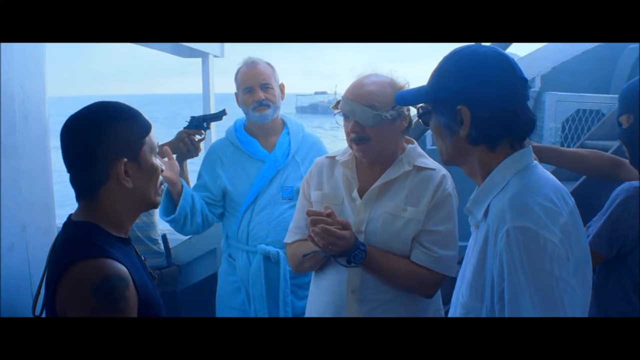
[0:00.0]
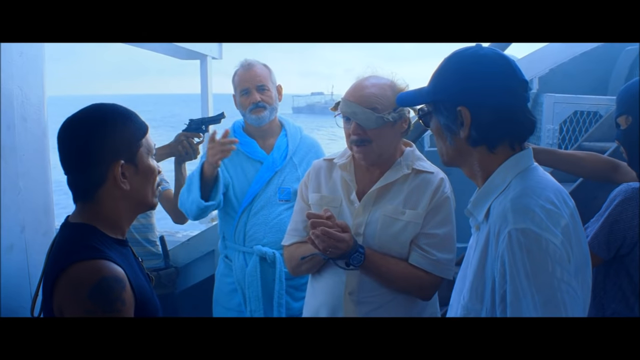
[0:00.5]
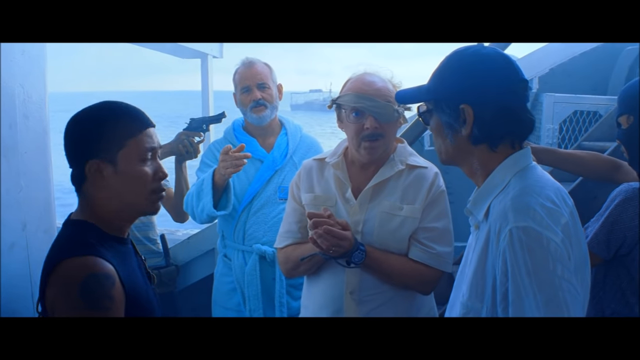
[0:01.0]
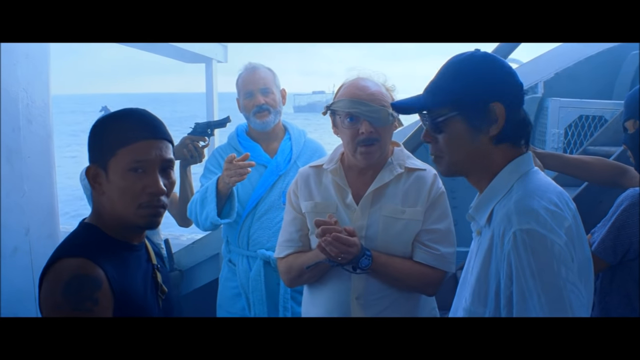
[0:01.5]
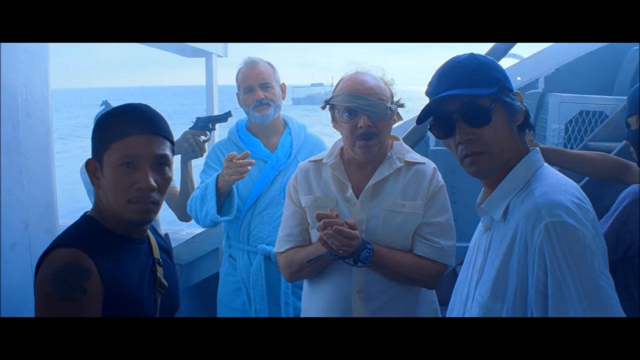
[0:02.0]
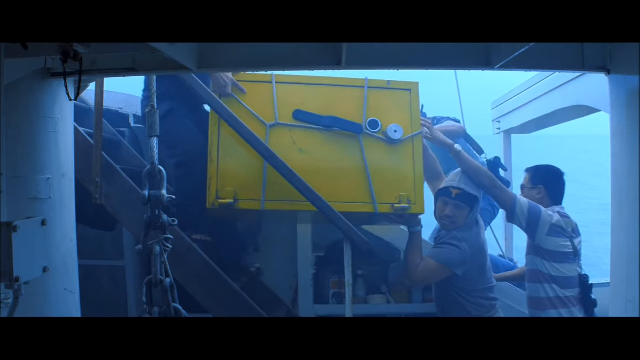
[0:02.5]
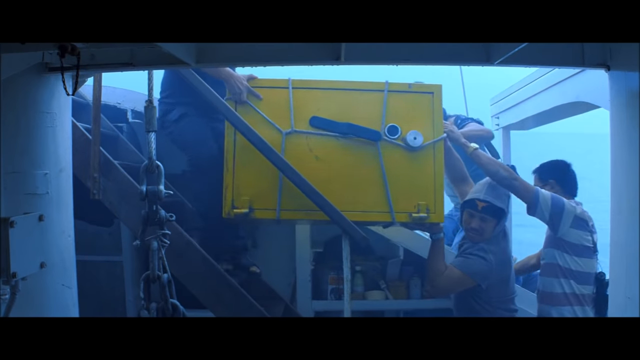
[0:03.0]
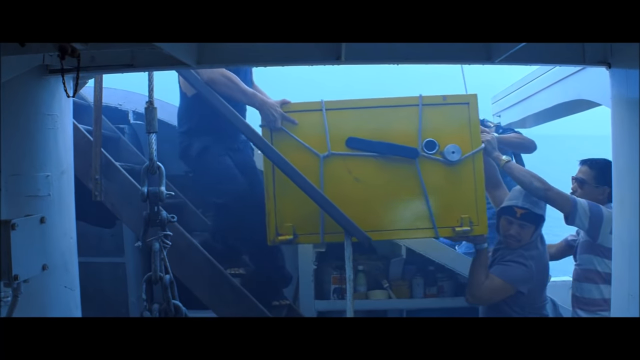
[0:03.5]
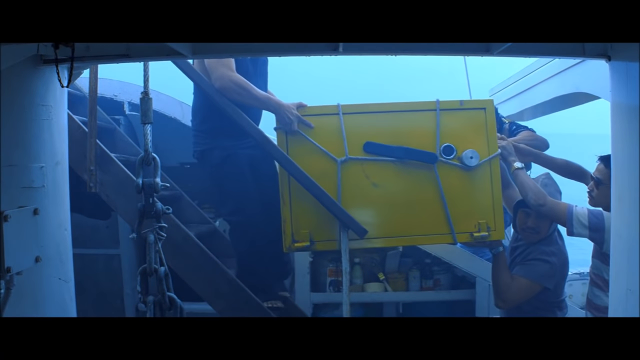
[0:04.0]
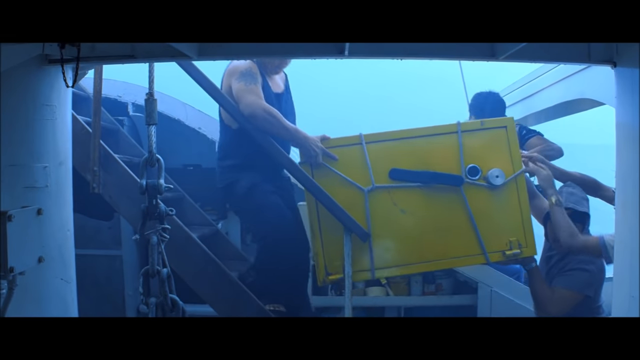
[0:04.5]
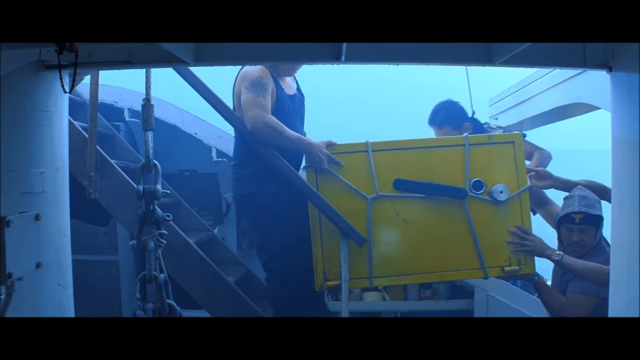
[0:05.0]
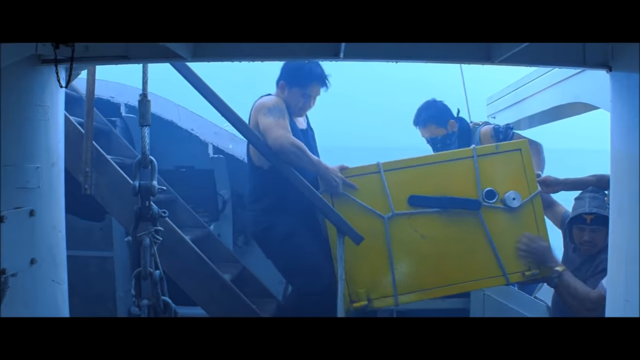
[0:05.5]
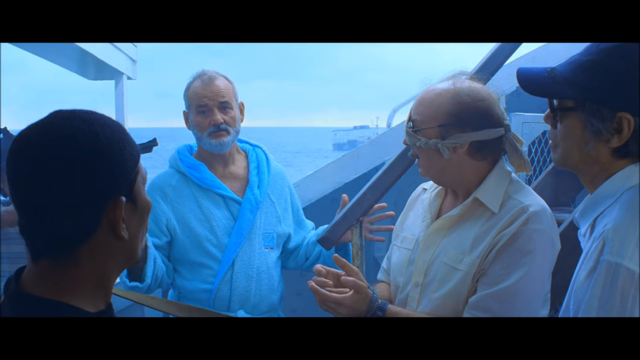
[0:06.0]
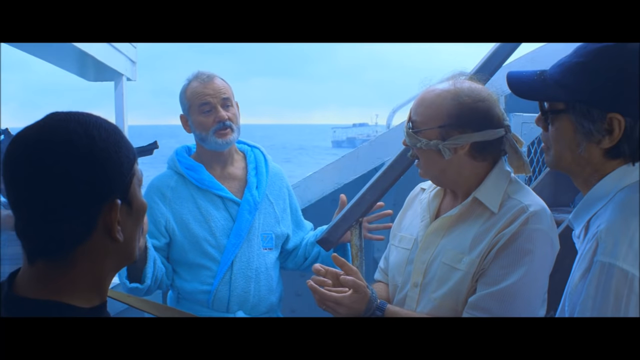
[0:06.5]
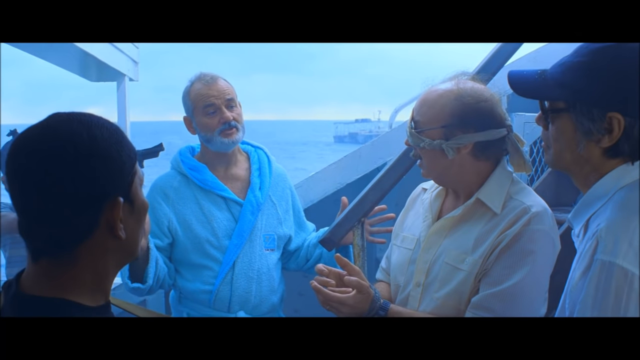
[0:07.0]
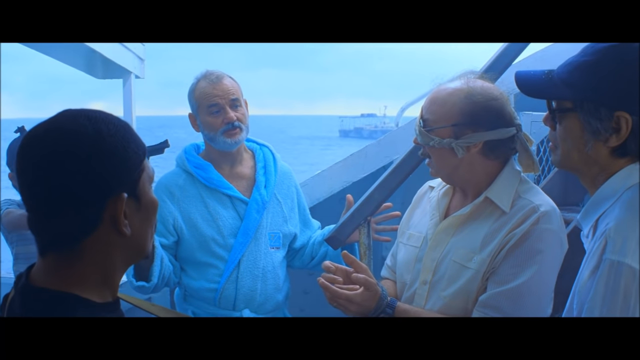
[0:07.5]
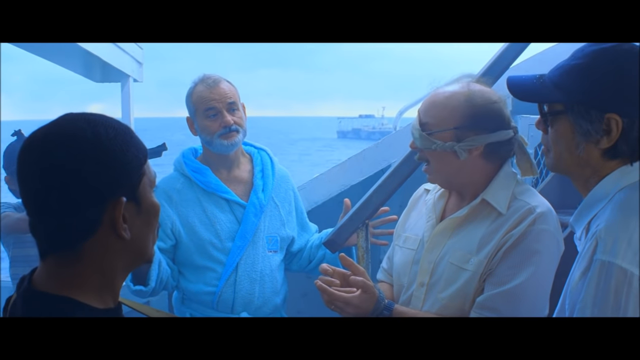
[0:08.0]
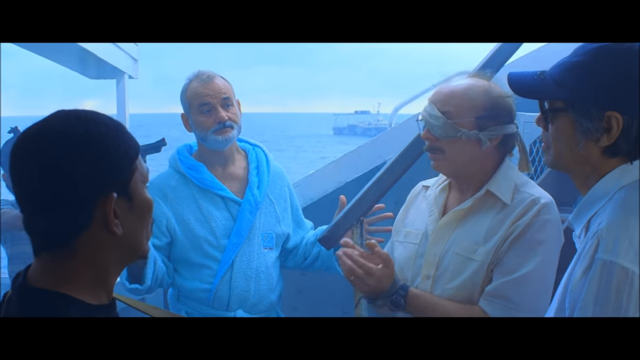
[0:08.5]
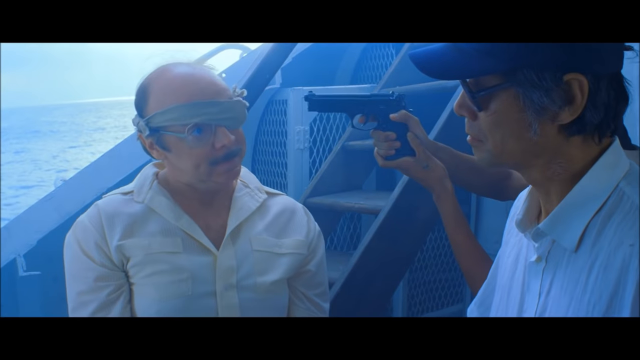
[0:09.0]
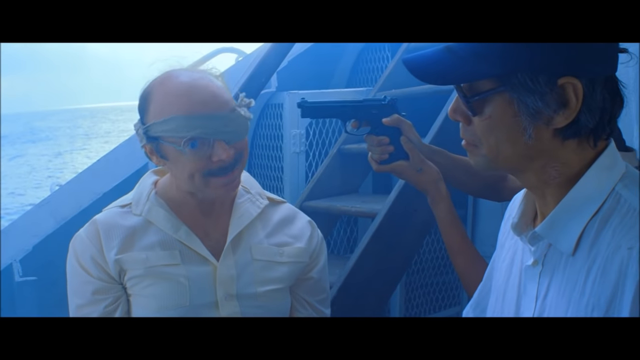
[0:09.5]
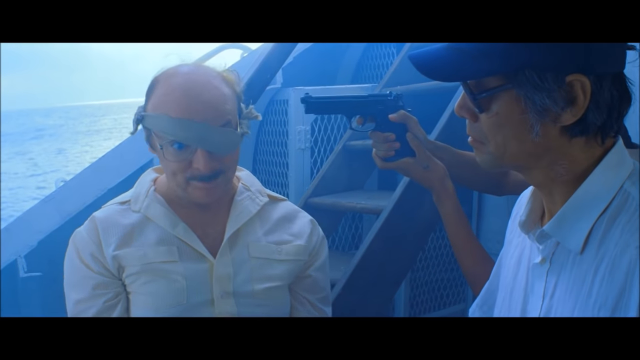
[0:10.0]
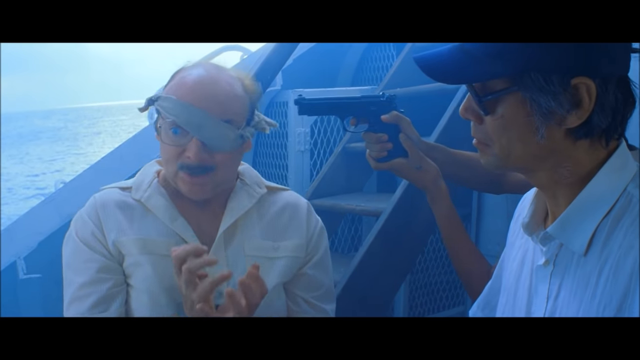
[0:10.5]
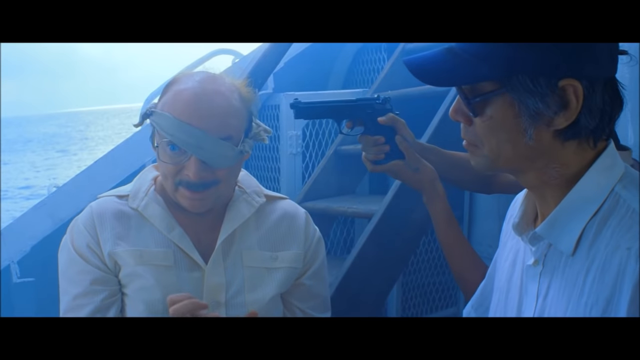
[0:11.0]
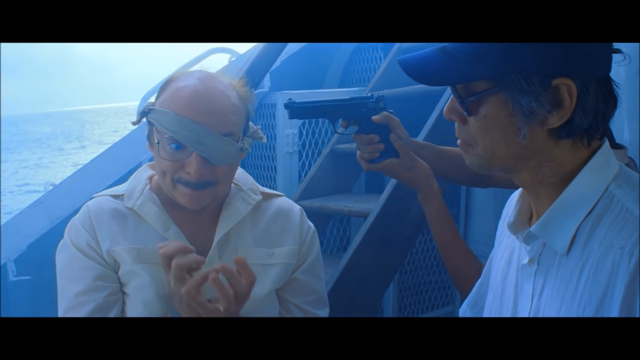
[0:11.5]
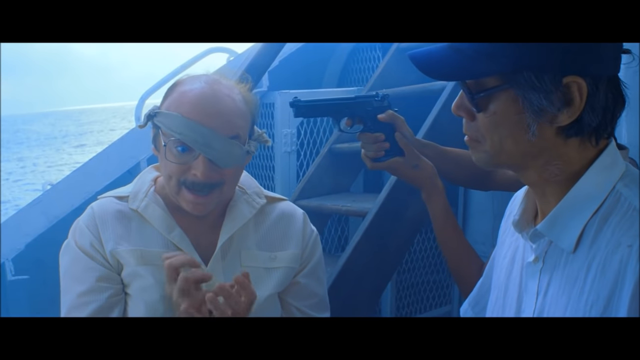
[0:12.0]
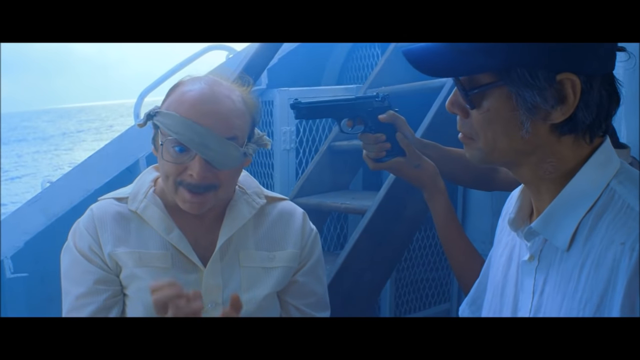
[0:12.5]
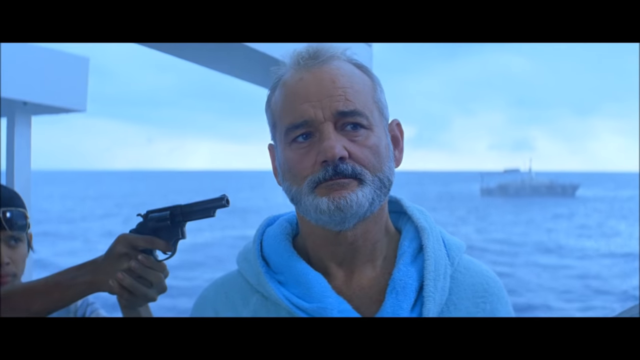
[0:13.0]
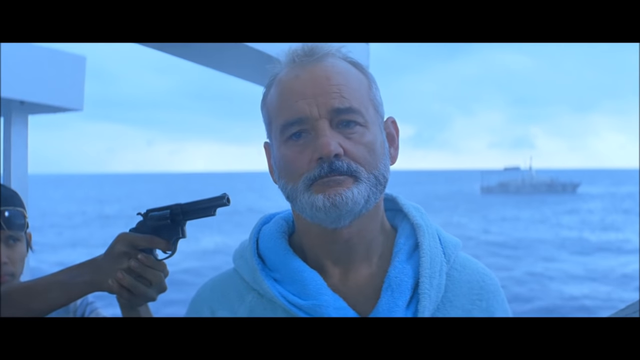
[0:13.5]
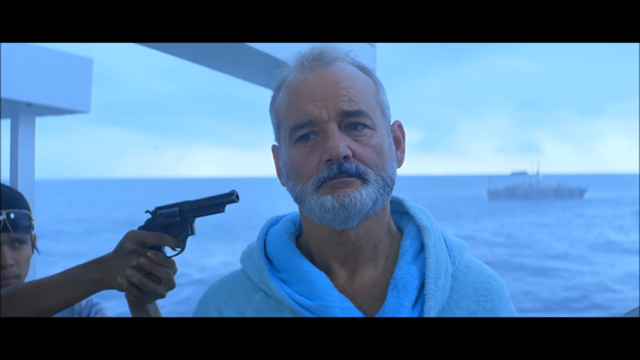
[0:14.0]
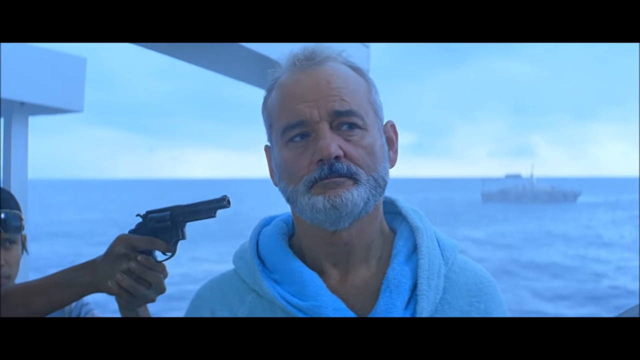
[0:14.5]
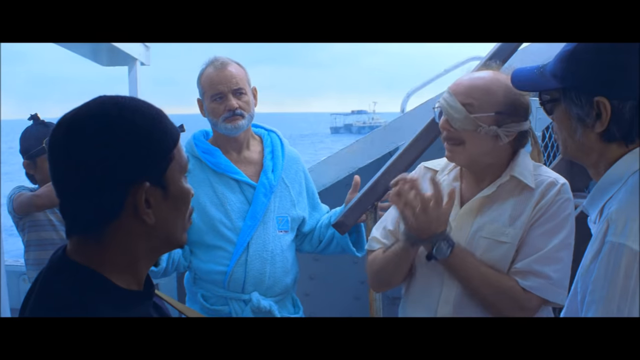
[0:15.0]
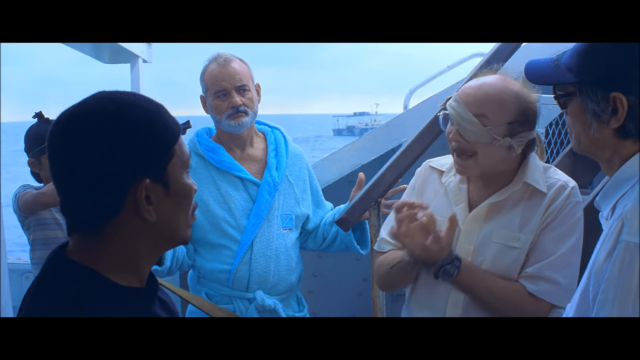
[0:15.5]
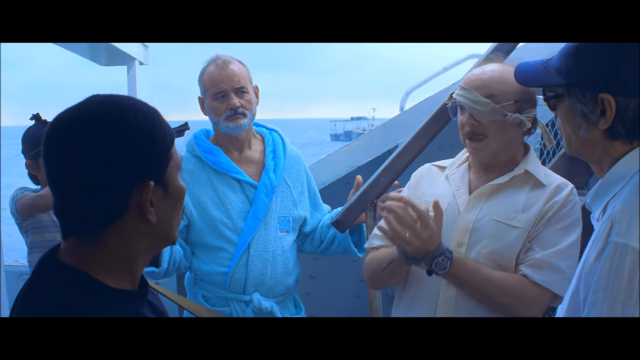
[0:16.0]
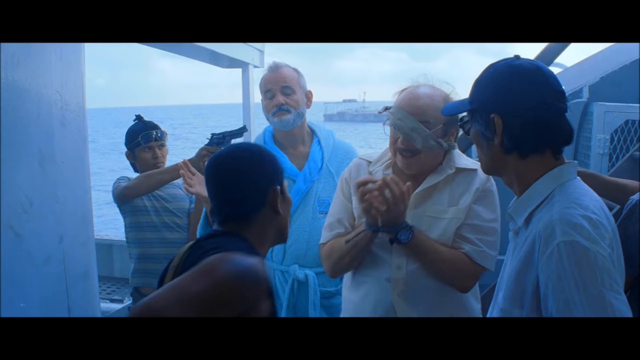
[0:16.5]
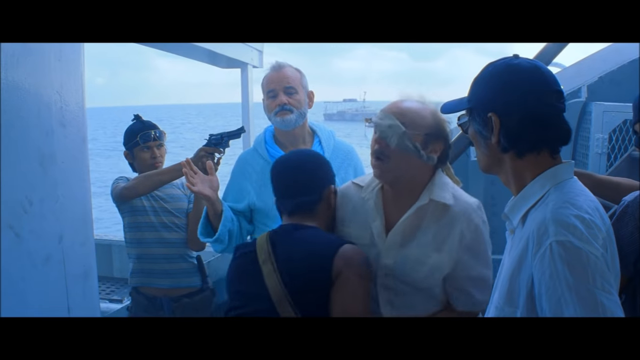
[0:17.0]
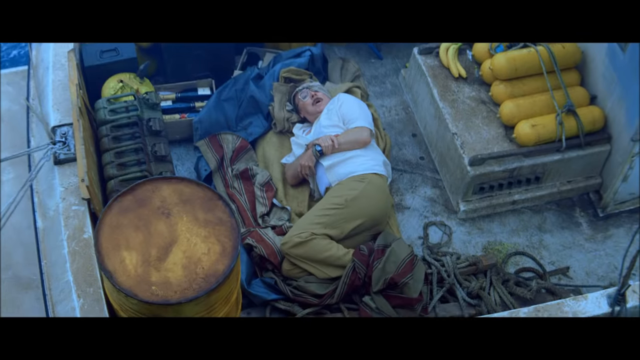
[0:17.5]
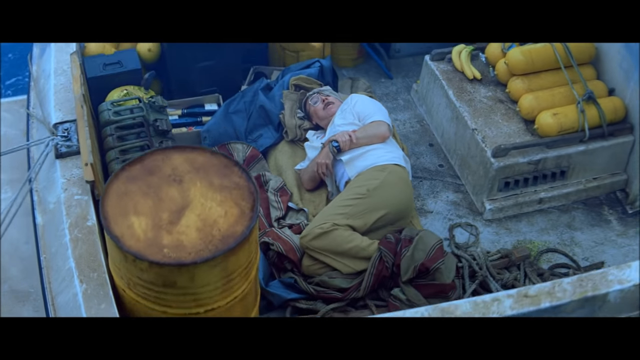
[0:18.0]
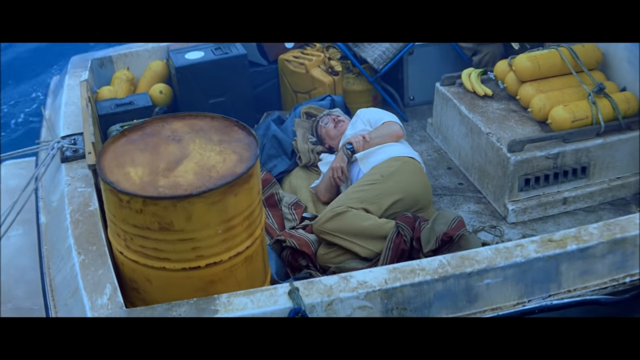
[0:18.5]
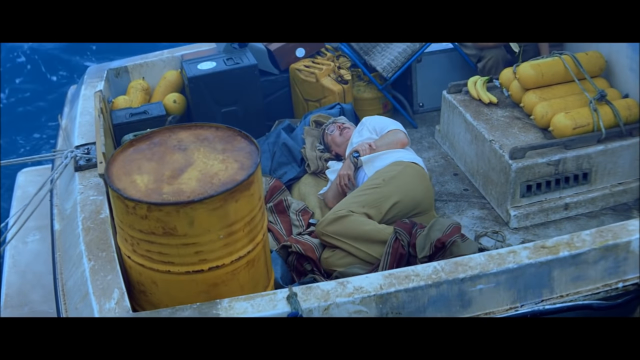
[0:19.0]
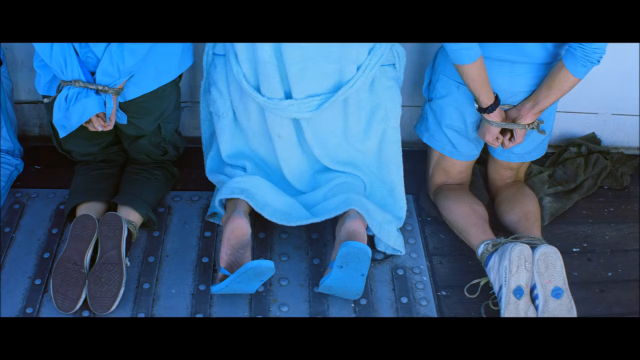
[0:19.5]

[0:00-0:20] This appears to be a scene from a movie. Bill Murray, wearing a light blue robe, is on screen with three men in front of him. All of them turn their faces toward the camera, and one man behind Bill Murray is pointing a gun at him. Next, four men get a yellow box down some stairs on a boat. The scene returns to Bill Murray speaking with these people, and a man wearing a yellow shirt, glasses and a patch over one eye continues to speak. The camera closes in on Bill Murray's face as he looks at them, and the young man behind him is pointing the revolver at his head. Finally, the man with the eye patch is shown alone, floating in a boat, followed by a shot of three people kneeling toward a wall with their hands tied up.